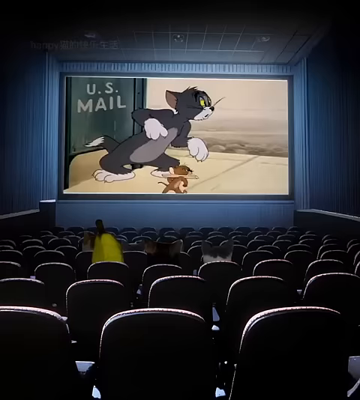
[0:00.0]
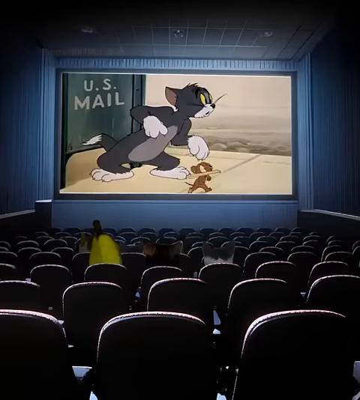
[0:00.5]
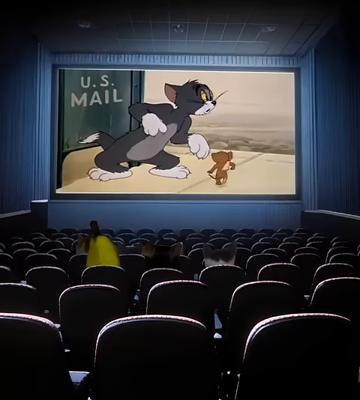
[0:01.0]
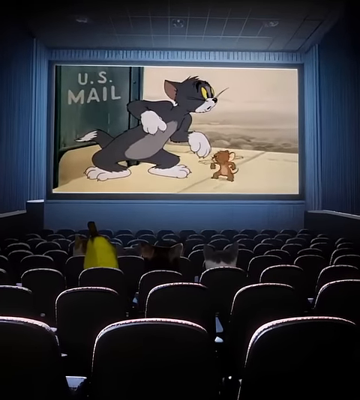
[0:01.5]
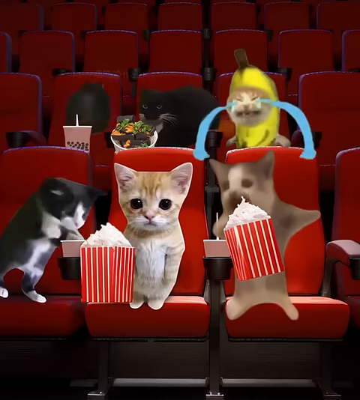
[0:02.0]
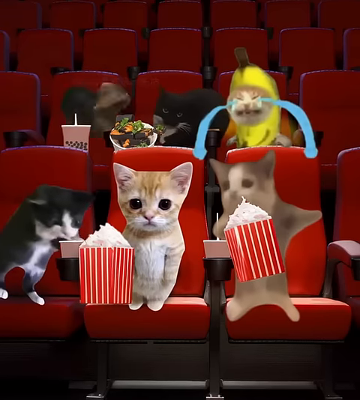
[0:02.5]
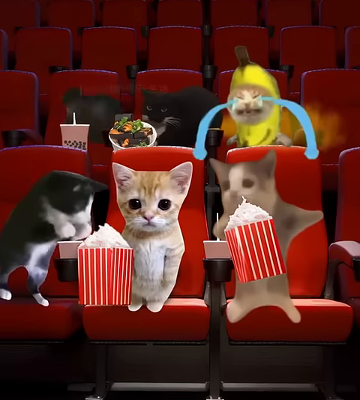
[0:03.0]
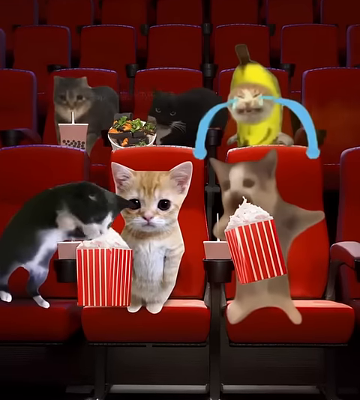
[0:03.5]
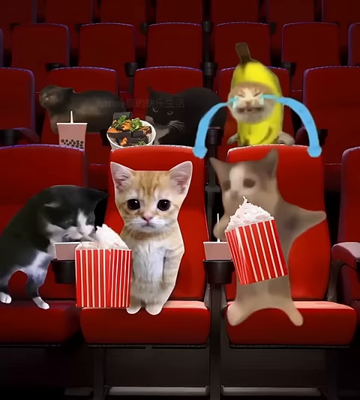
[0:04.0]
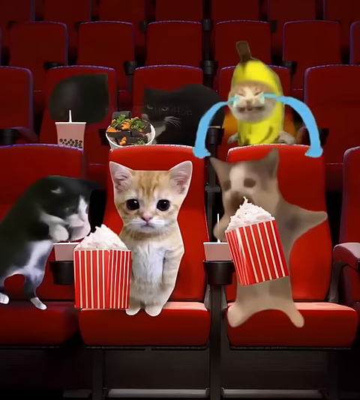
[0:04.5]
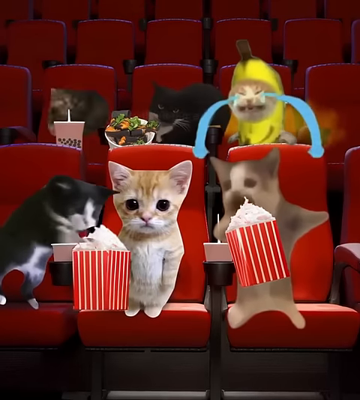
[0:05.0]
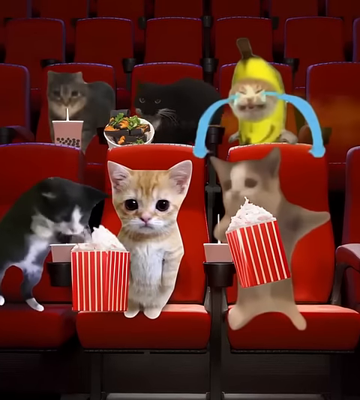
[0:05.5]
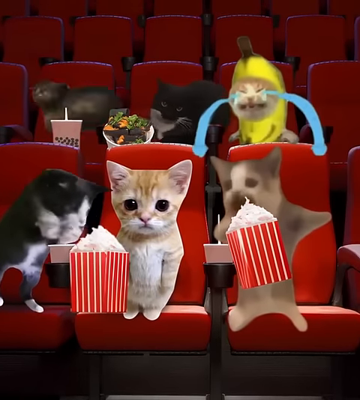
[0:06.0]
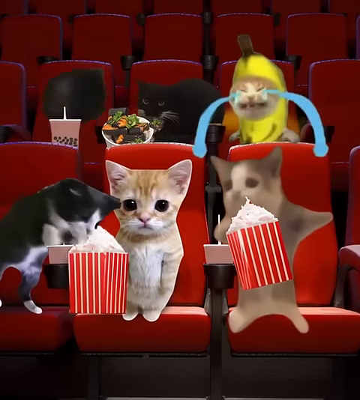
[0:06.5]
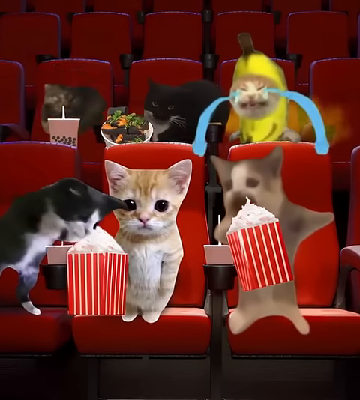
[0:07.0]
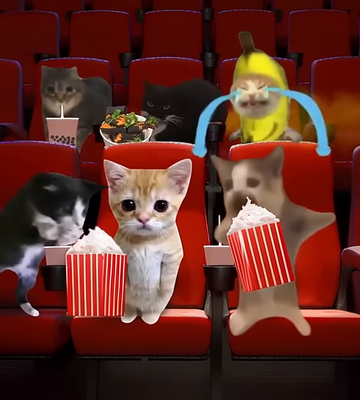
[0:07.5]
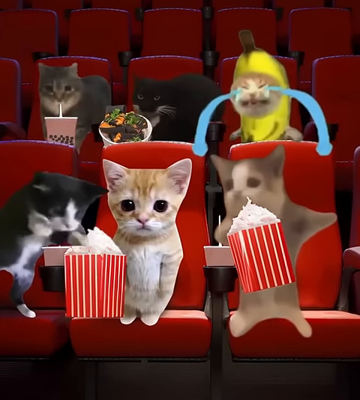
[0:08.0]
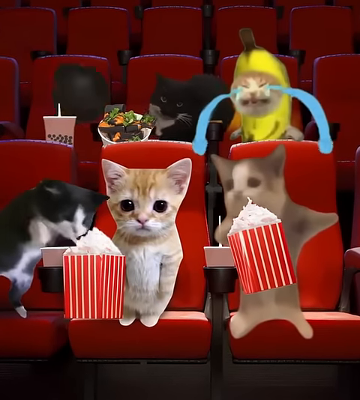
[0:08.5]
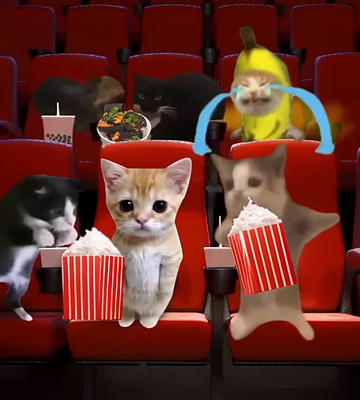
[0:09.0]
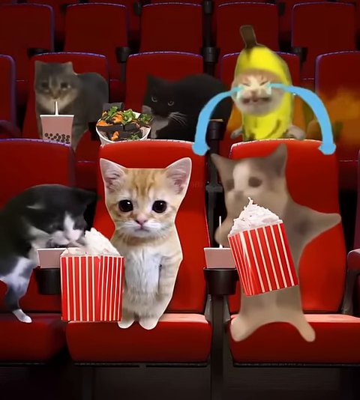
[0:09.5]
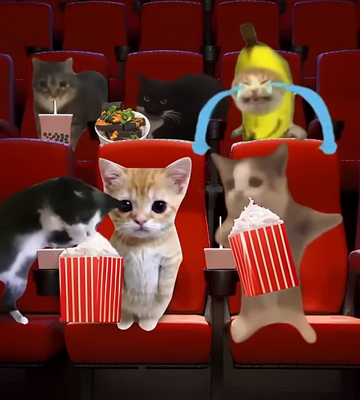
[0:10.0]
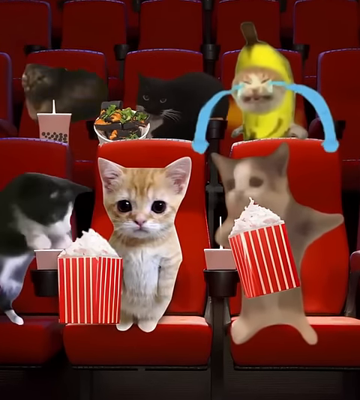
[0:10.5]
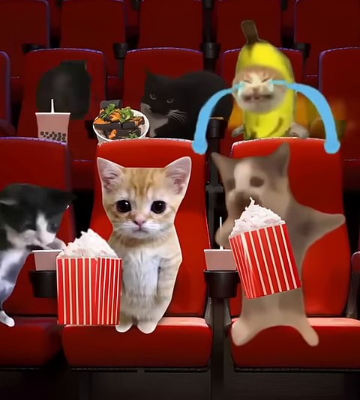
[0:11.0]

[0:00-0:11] The video opens in a movie theater, apparently viewed from the back of the theater looking at the screen, where a Tom and Jerry cartoon is playing on the big screen. Characters are seated in the middle of the theater watching Tom and Jerry. After a couple of seconds, it transitions to animated images of cats sitting in the theater. There are three cats in the front row and another three behind them. Two of the cats in the front have popcorn, and another cat in the front on the left is reaching for the popcorn. In the back row, a cat in a banana costume looks like it is crying. Next to that cat is one with some kind of food in front of it, a black cat with white fur as well. To the left of that is a cat with a drink that looks like it may be bubble tea. The cats are sort of moving around, especially the cat eating popcorn; the one with the bubble tea is sort of spinning around, and the cat with the other plate of food in front of it is sort of rocking side to side.